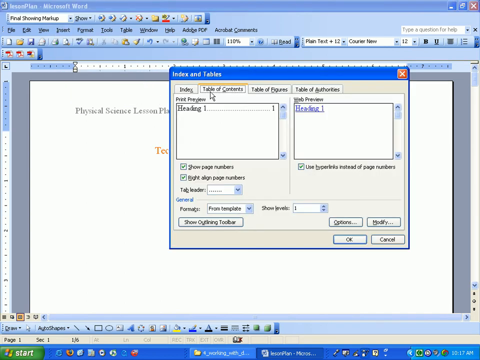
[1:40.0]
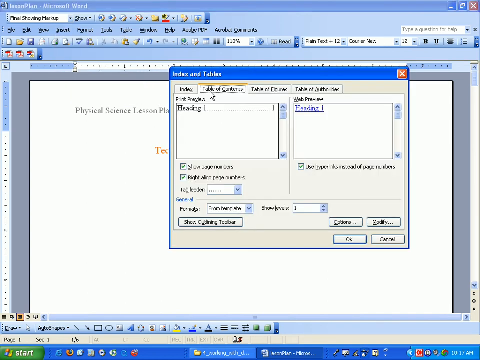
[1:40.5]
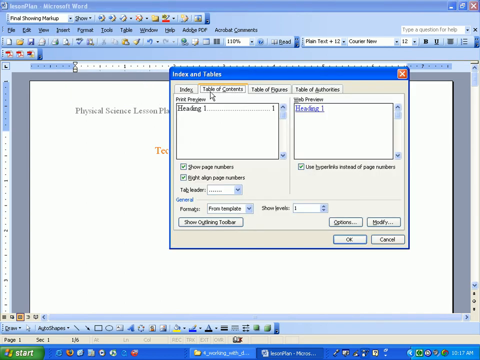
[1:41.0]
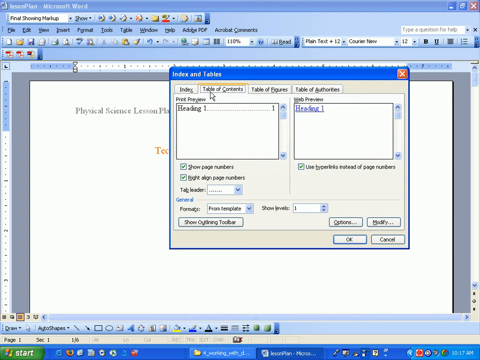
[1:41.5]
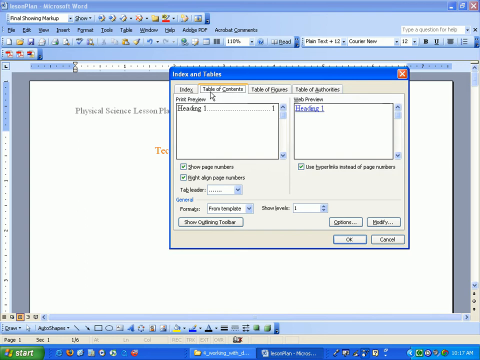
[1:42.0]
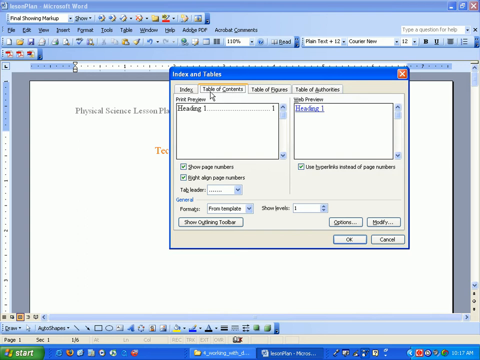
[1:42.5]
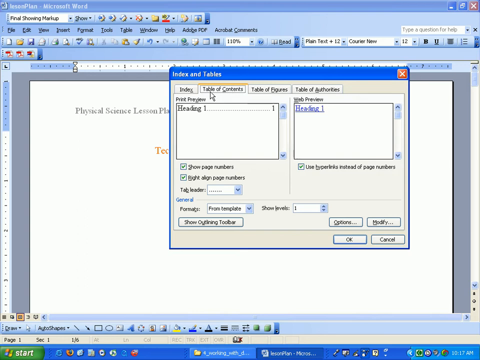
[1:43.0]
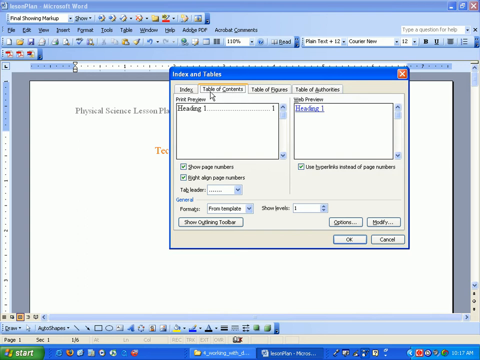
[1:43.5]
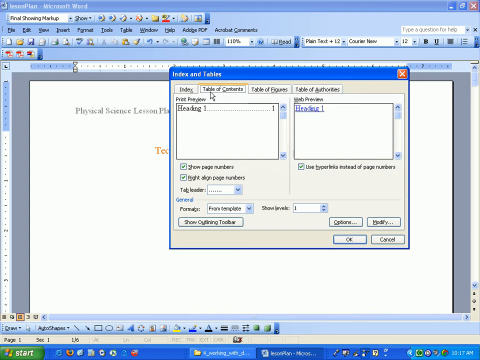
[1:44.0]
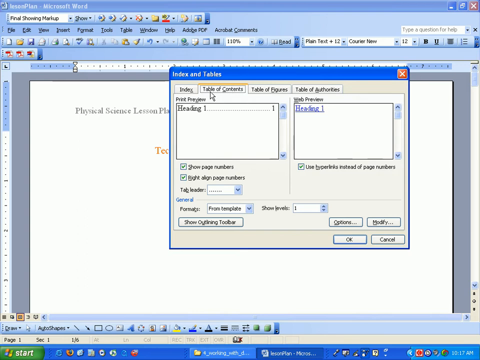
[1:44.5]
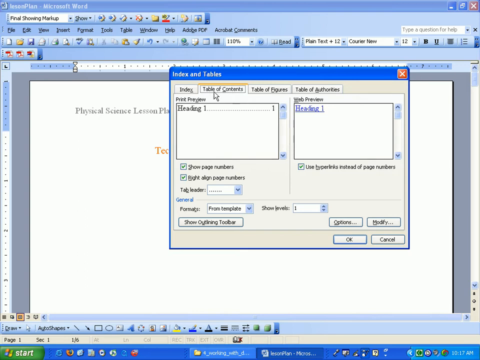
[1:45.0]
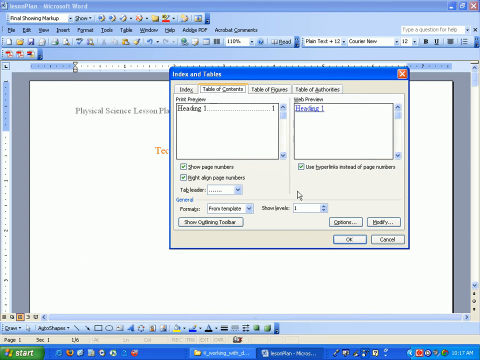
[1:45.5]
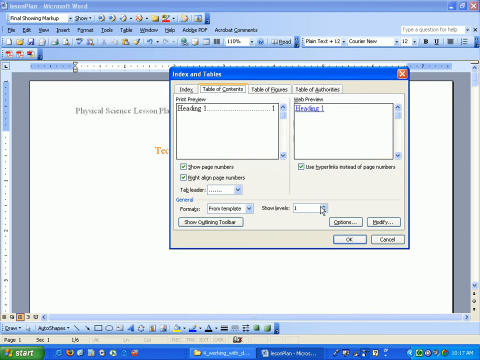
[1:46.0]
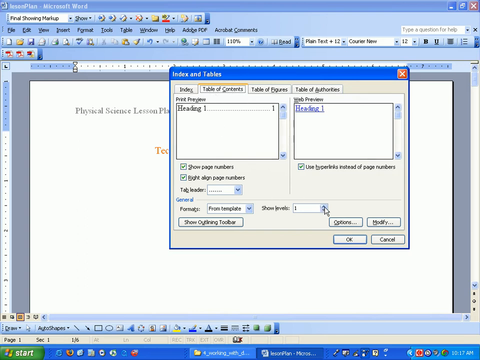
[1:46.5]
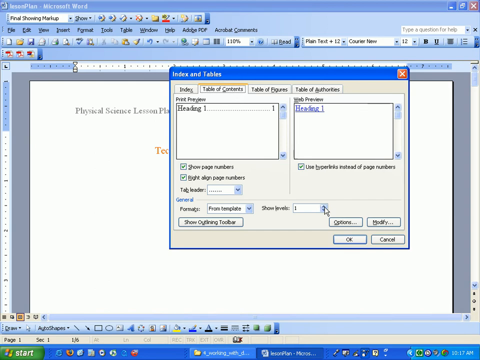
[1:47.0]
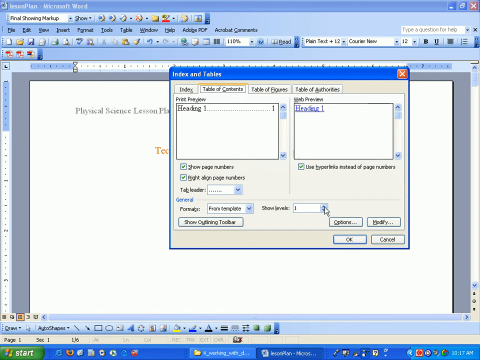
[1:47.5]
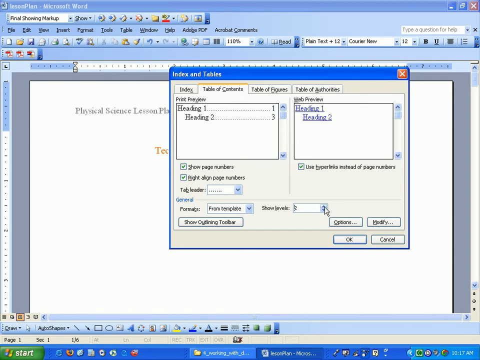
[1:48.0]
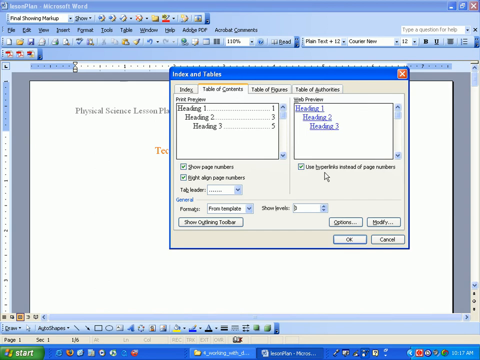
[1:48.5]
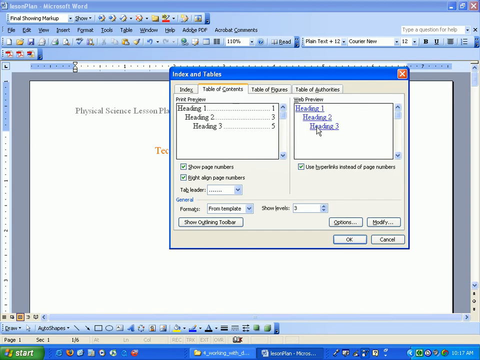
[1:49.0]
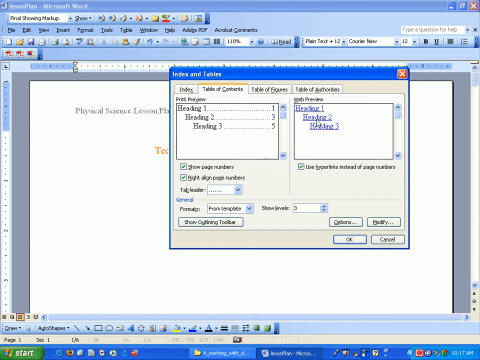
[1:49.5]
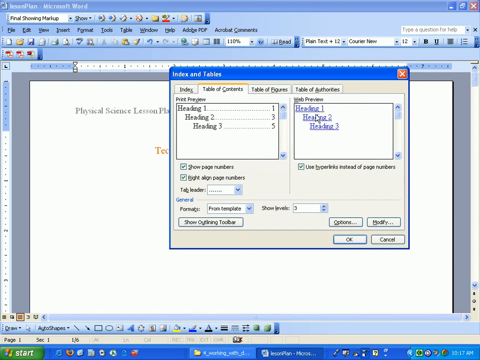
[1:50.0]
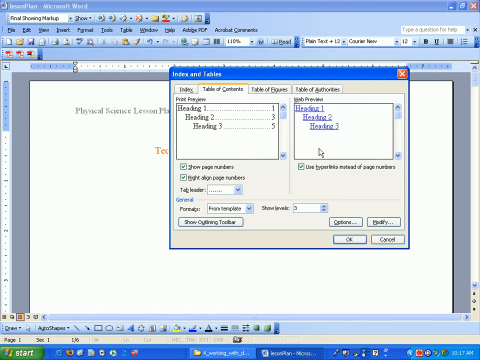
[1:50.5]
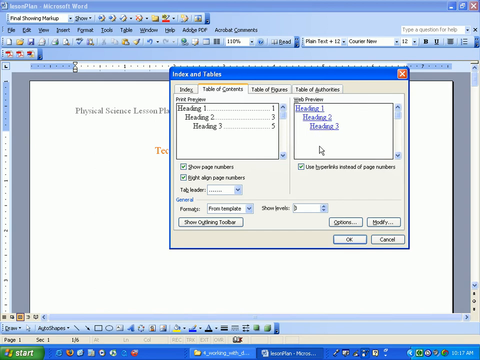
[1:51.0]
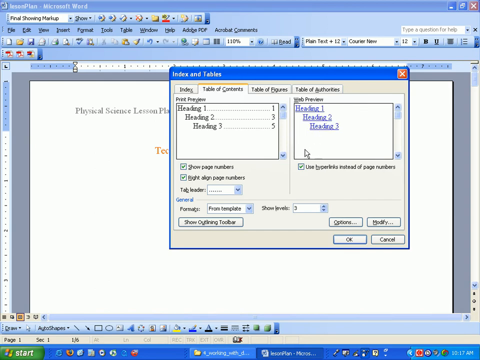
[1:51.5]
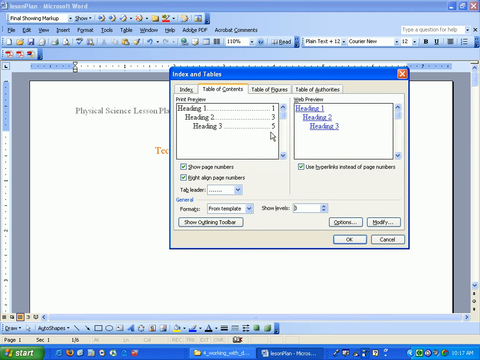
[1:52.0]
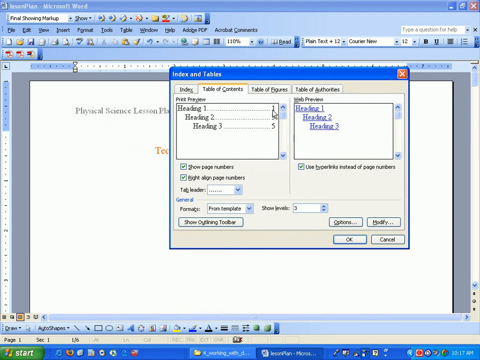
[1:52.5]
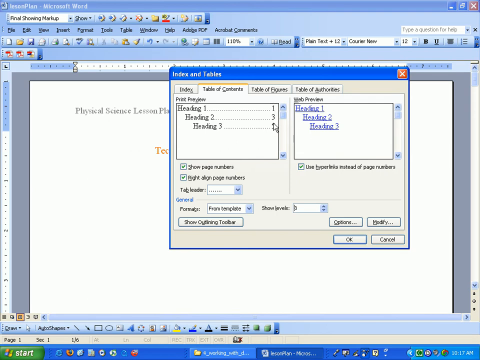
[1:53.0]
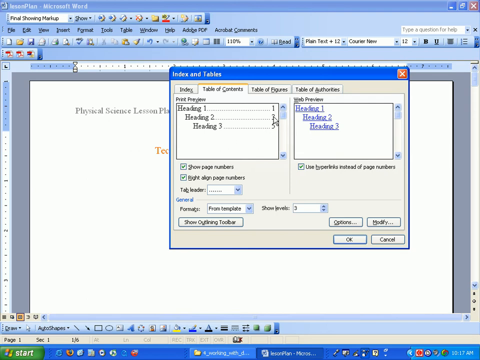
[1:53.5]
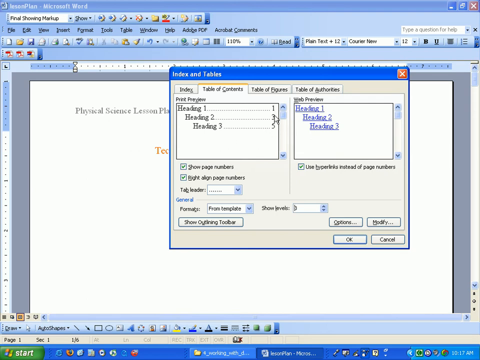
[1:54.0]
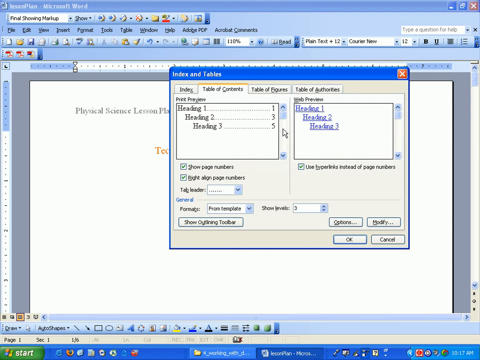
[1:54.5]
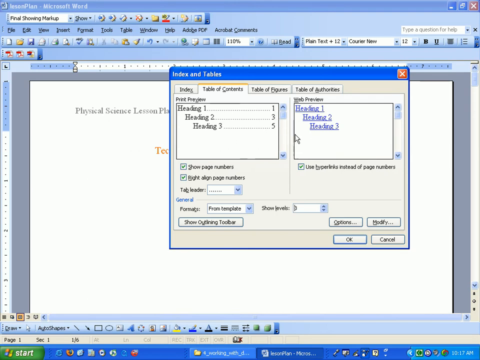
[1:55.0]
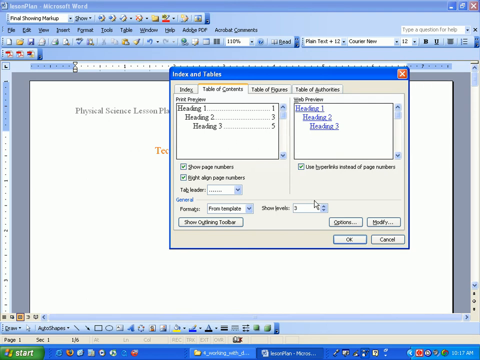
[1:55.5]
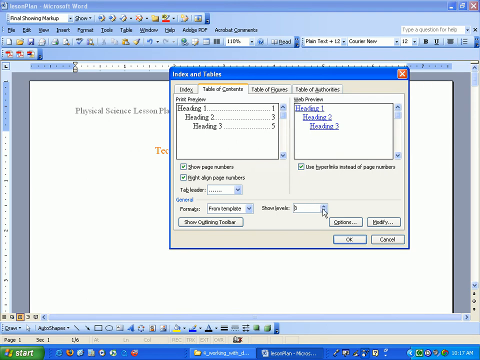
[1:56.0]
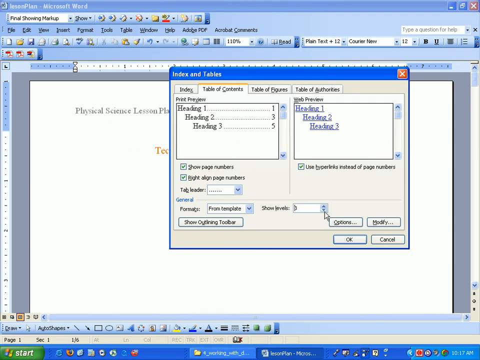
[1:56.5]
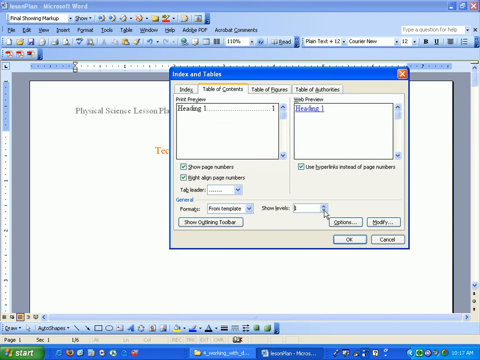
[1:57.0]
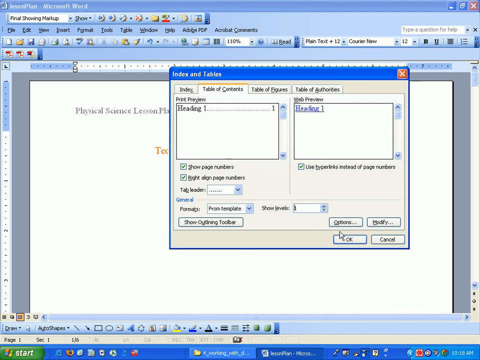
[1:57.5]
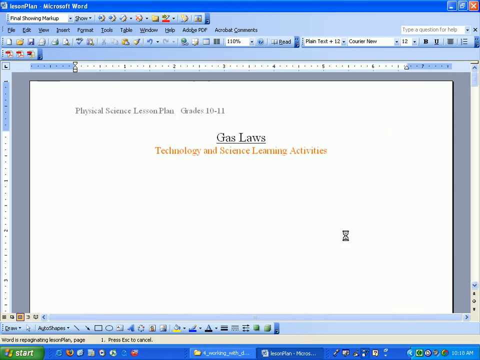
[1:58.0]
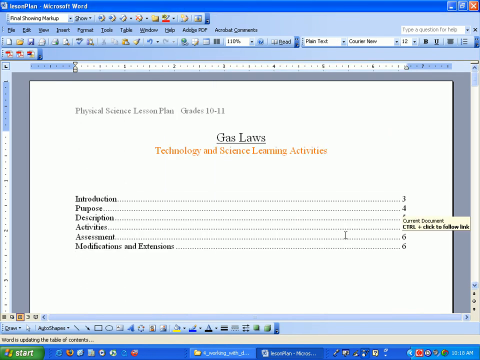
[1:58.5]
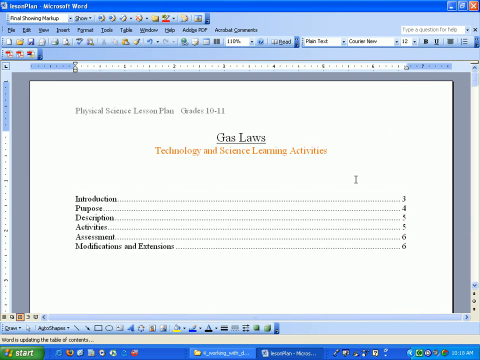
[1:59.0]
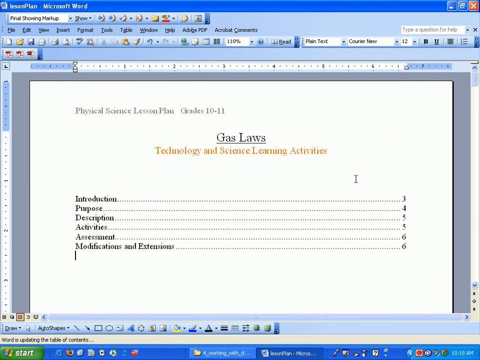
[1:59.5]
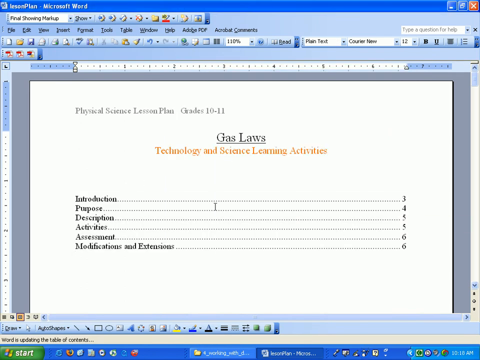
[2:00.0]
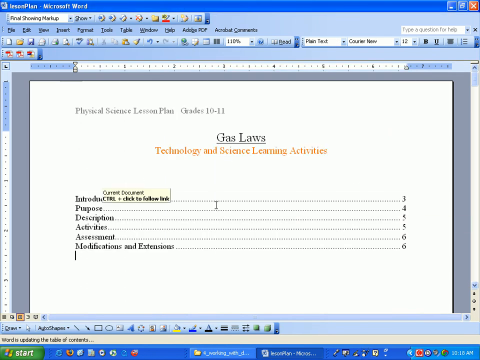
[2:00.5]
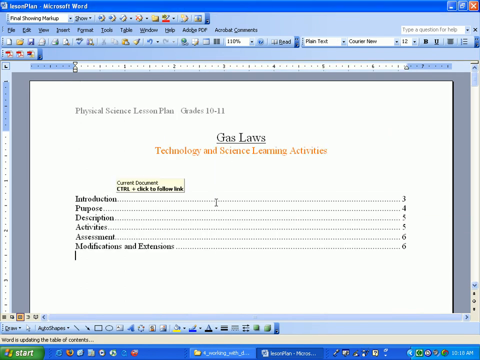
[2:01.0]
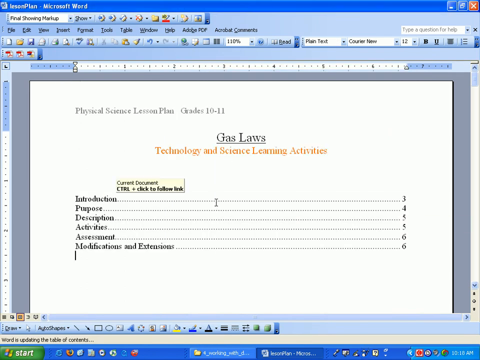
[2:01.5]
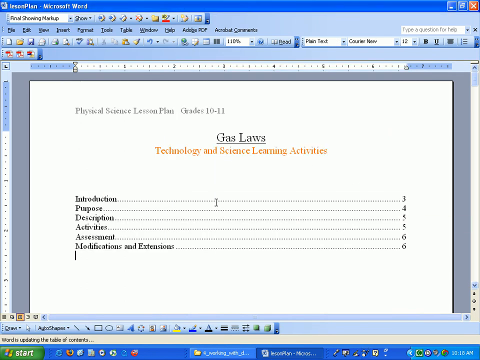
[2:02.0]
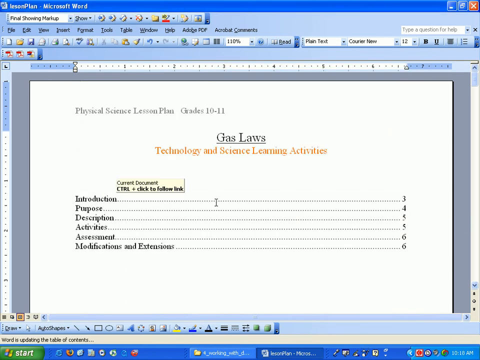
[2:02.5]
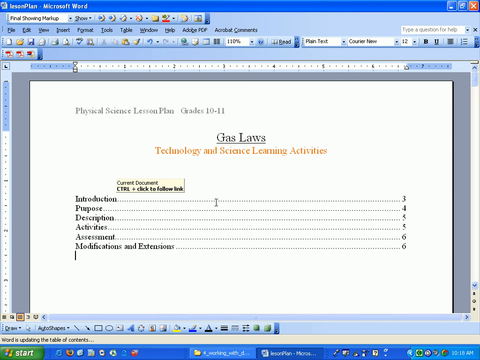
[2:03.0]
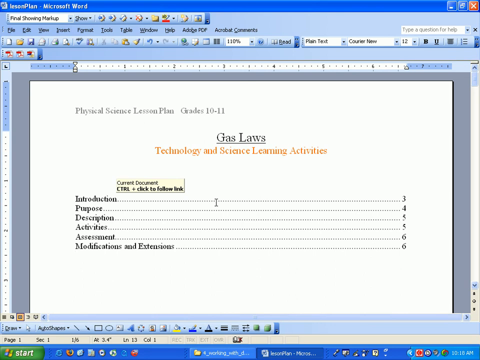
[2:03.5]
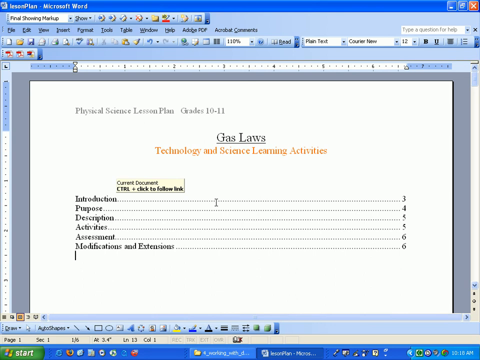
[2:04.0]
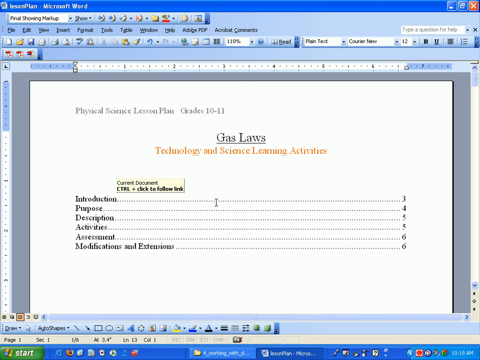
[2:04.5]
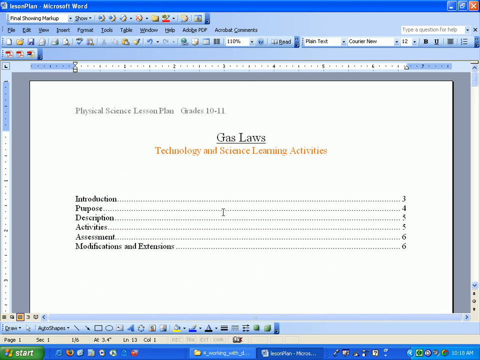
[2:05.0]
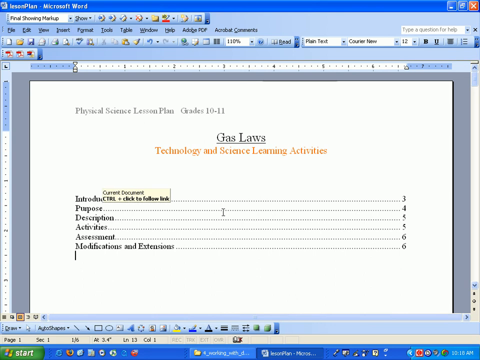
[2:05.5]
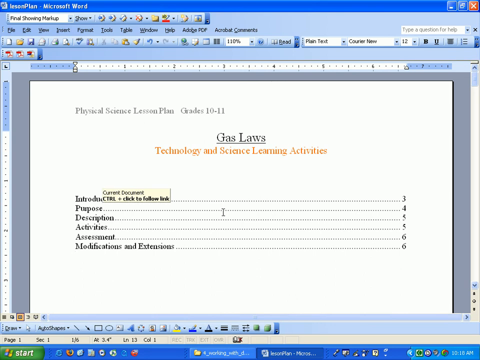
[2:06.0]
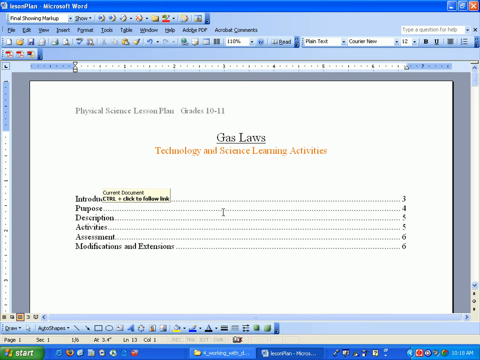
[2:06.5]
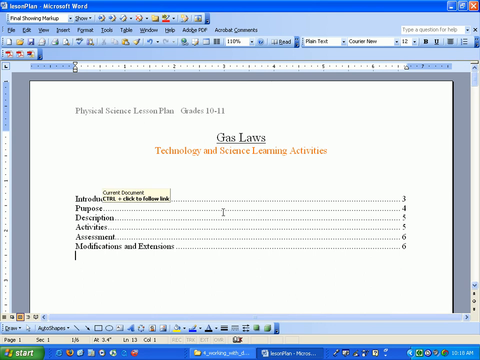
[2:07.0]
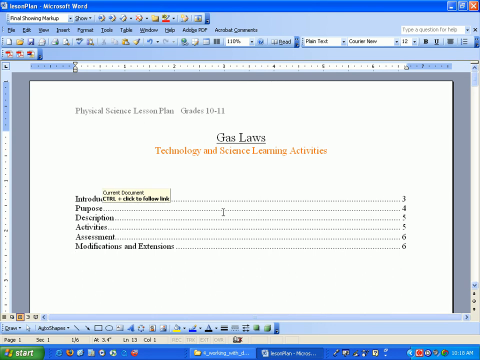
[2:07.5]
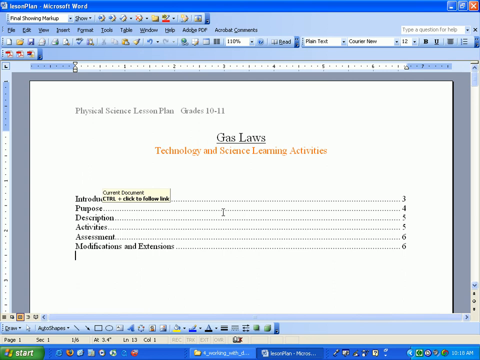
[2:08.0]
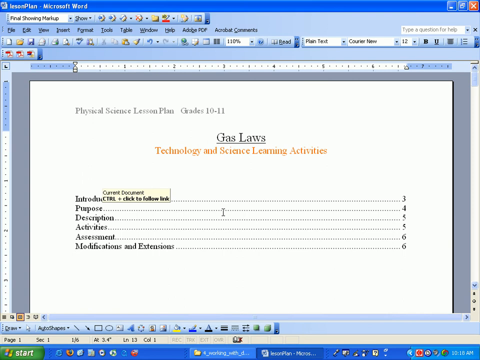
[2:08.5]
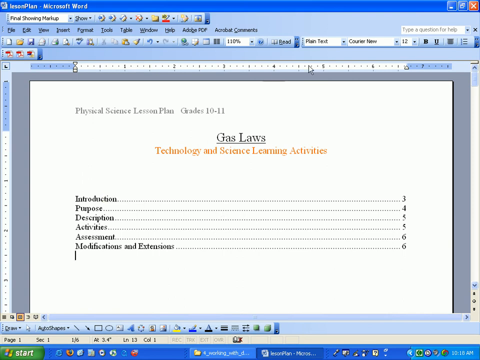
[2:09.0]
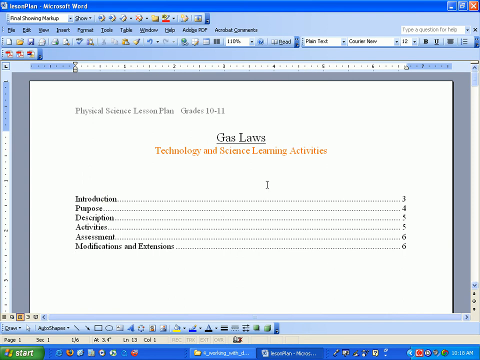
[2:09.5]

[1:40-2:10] The person is numbering their headlines and giving each page a name or an introduction, seemingly like writing a book.